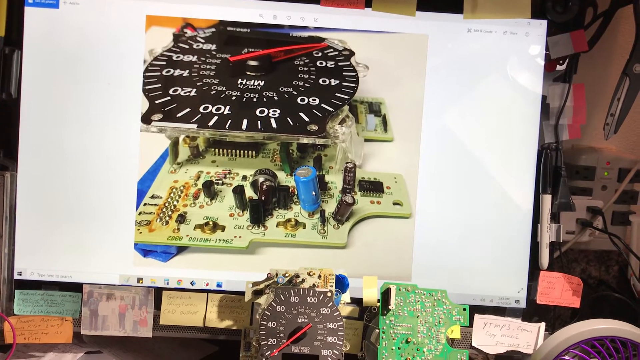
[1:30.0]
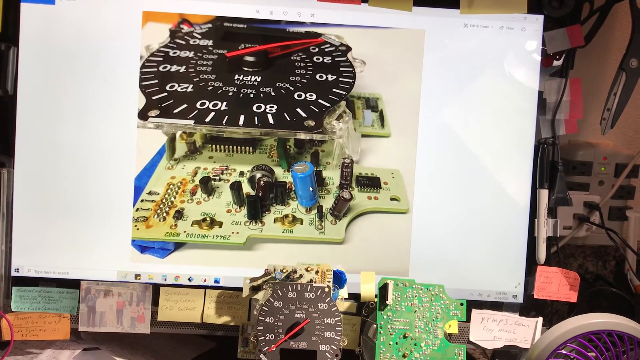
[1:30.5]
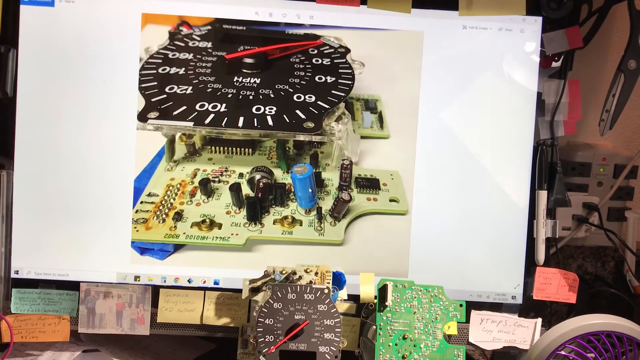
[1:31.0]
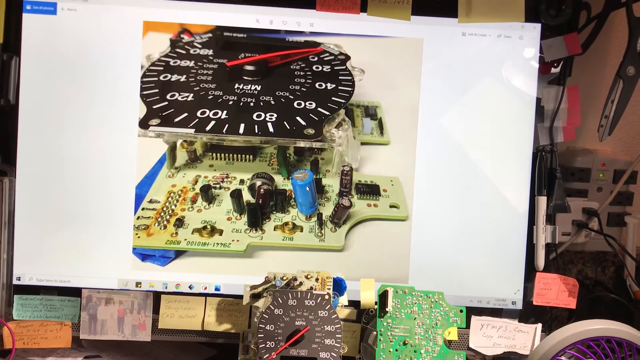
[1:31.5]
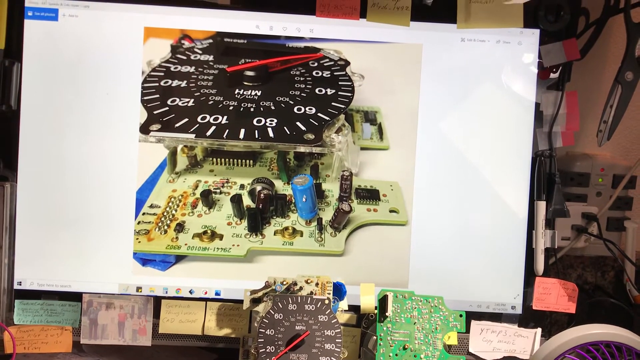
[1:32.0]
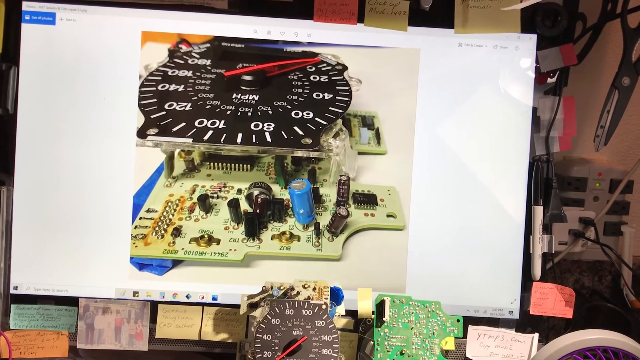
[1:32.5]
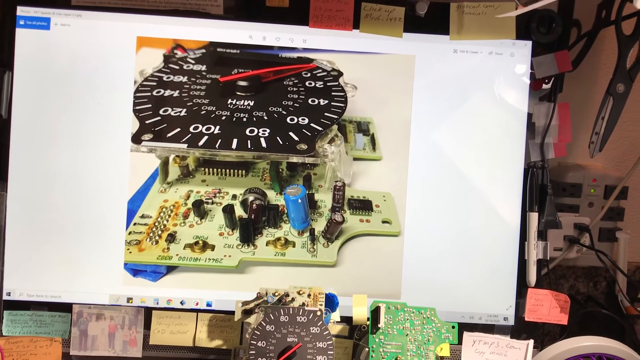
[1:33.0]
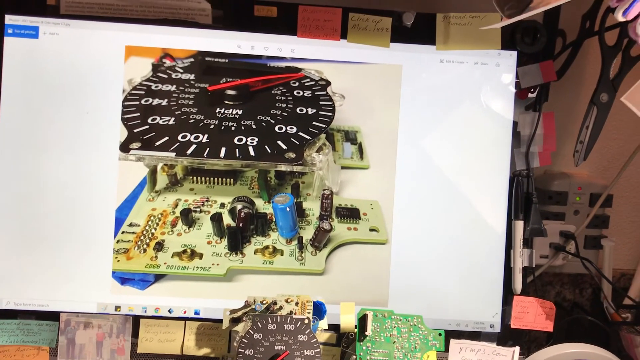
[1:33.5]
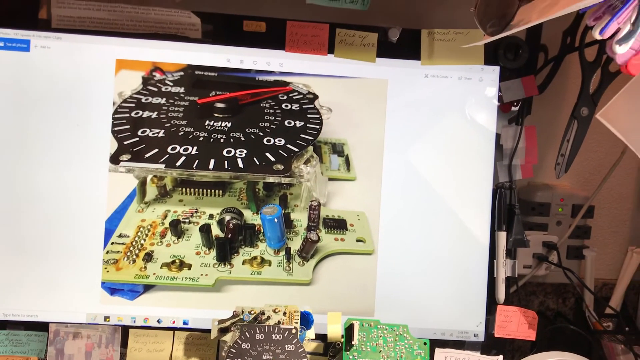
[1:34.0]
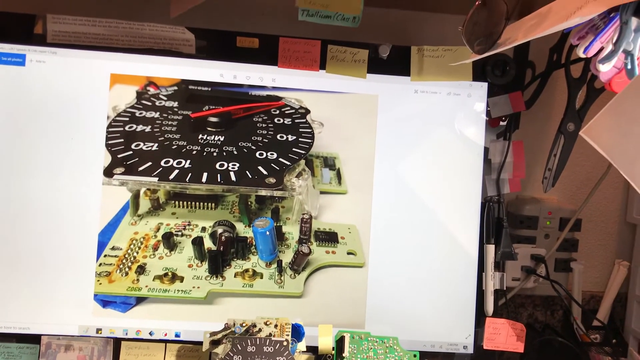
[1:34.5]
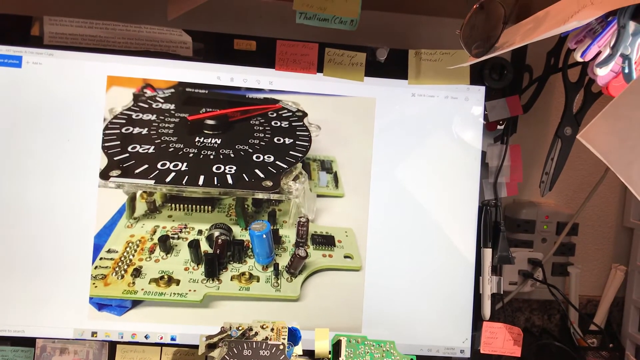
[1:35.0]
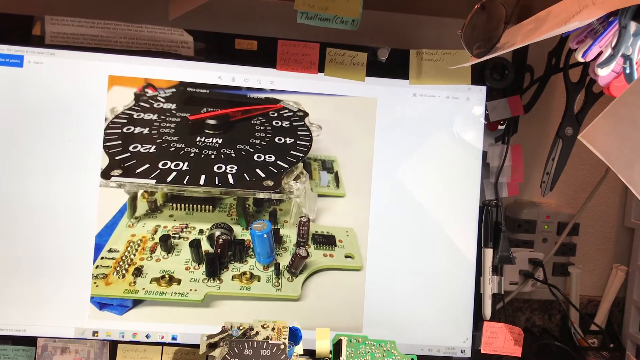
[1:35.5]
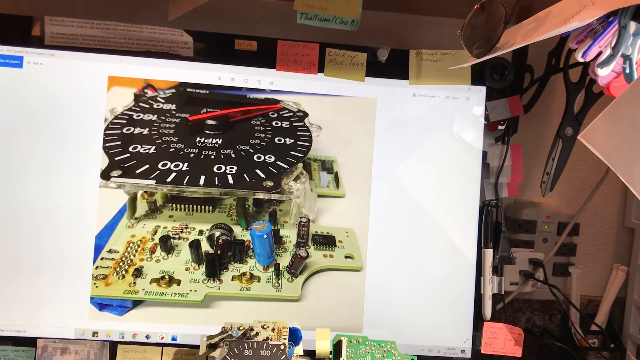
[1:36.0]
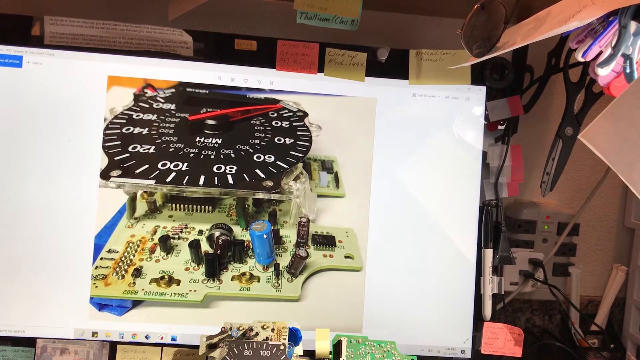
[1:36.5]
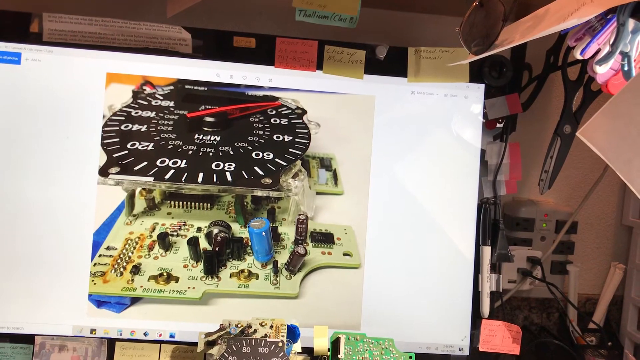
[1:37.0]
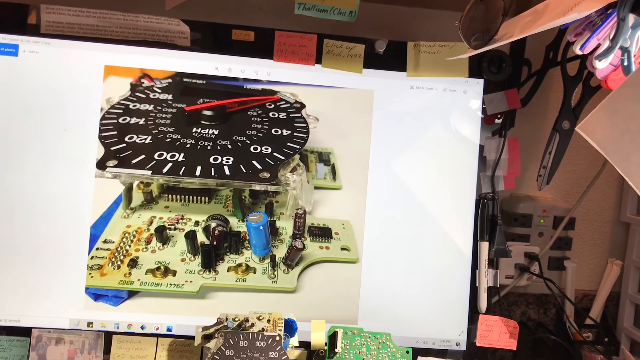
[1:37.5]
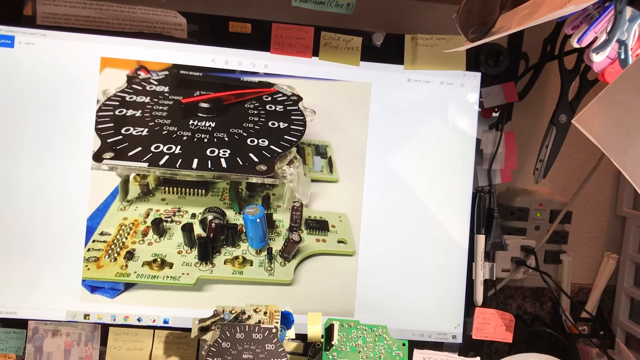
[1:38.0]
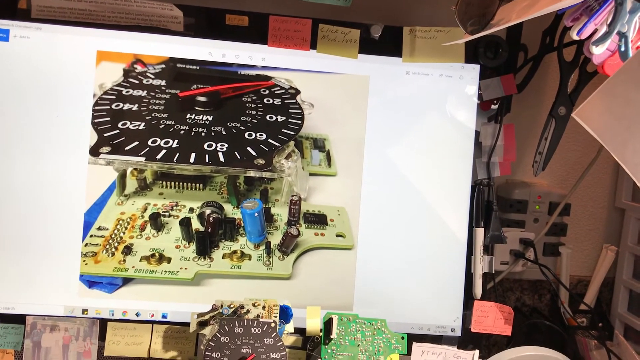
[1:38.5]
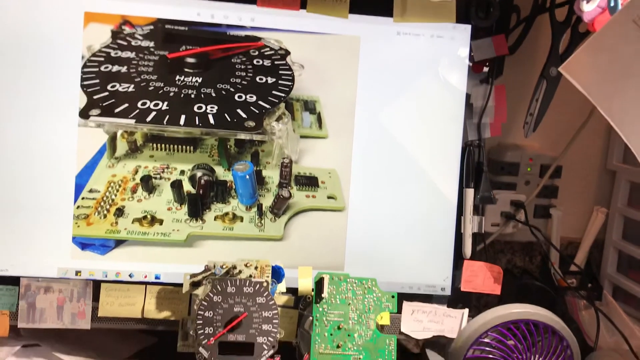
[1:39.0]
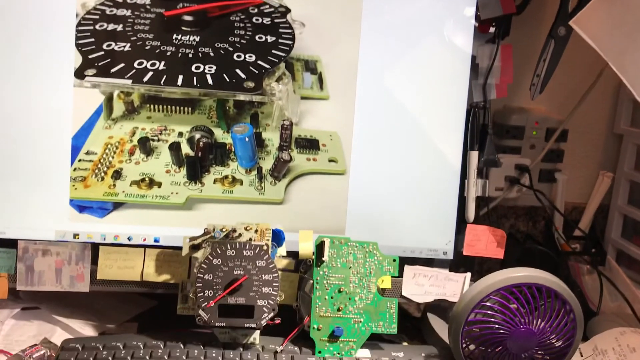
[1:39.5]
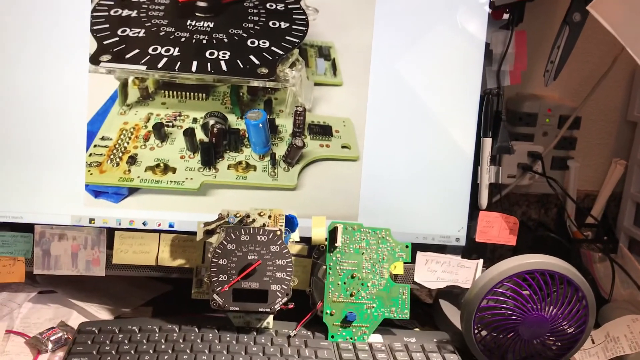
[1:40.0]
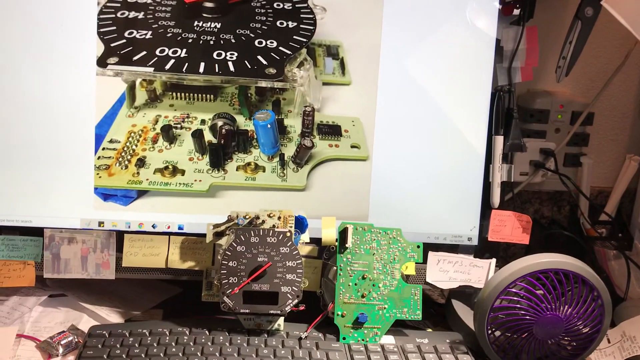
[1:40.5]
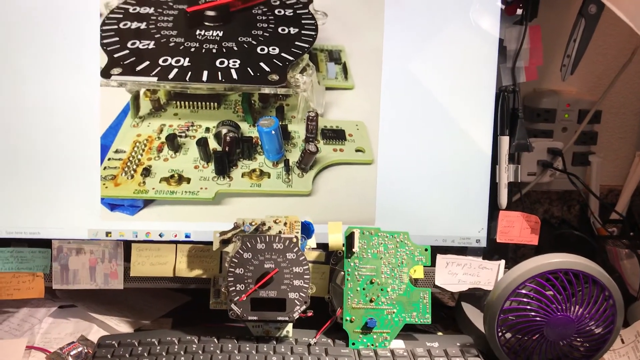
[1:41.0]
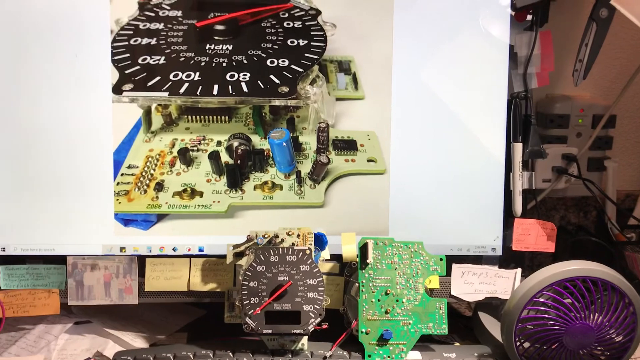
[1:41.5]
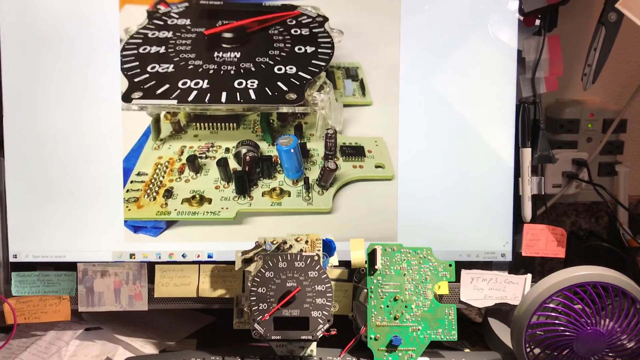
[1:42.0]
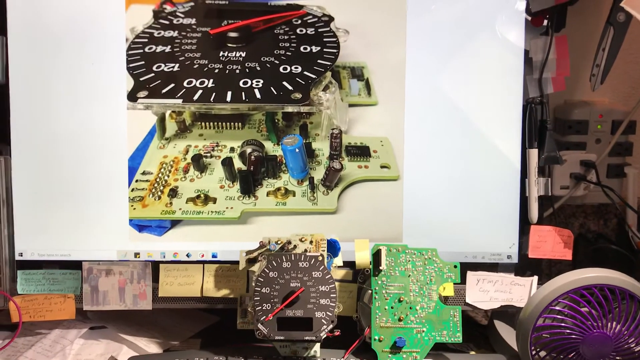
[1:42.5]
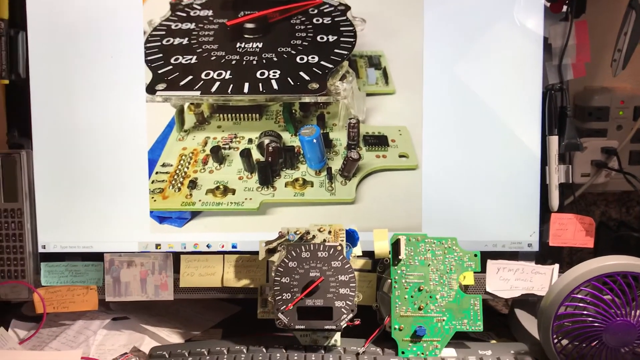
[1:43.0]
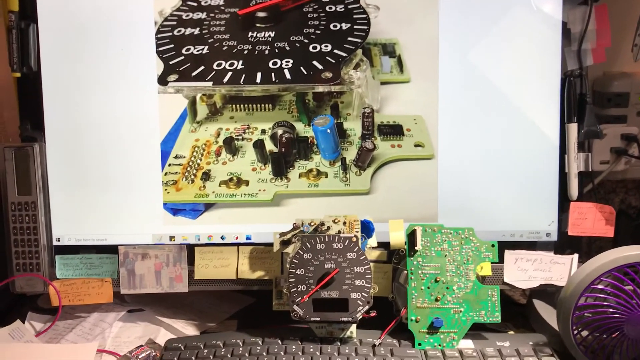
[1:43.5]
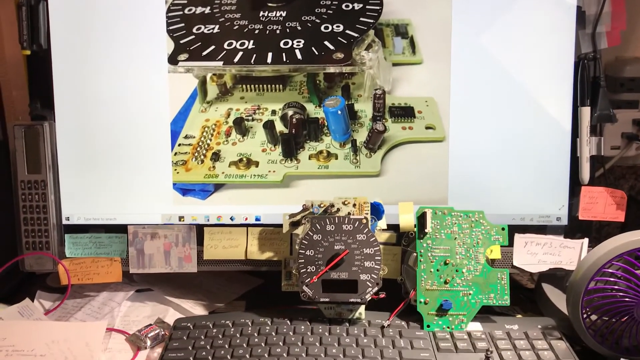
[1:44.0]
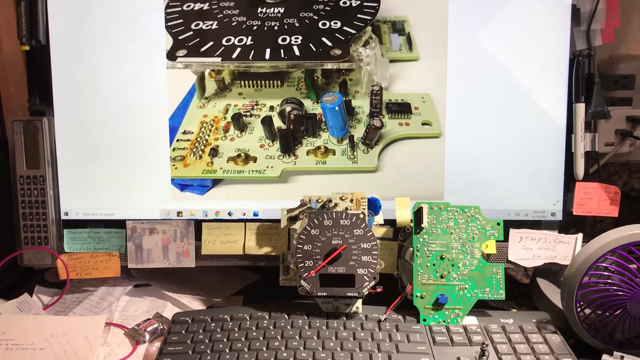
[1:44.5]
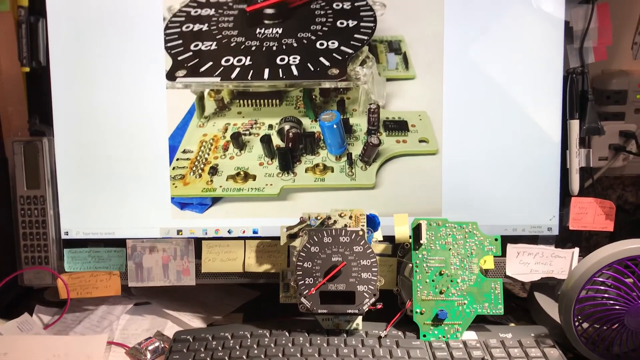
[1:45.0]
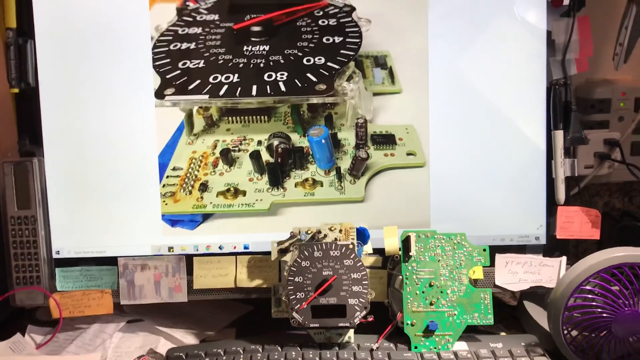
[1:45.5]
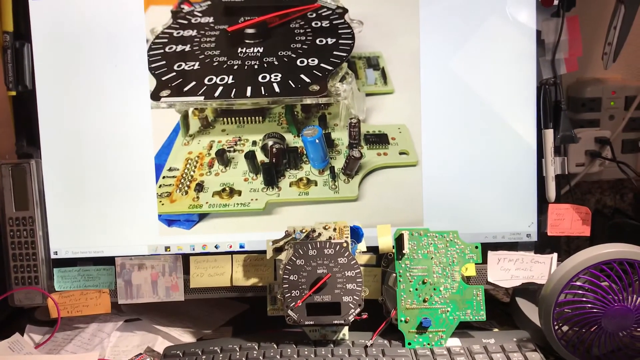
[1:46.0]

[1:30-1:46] The monitor shows a close-up picture of the speedometer, then the view pans down to show the two speedometers leaning against the monitor and sitting on the keyboard. The front of the fan is visible: a gray fan with purple on the front. Post-it notes are all over the monitor, and the power box is visible, a big gray thing with what looks like a white surge protector on it. A silver thing by the monitor has a bunch of number or letter pads on it and remains unidentified. The desk is still very messy. Someone points at the blue thing on the CPU, then extends all fingers and points further back on the CPU.